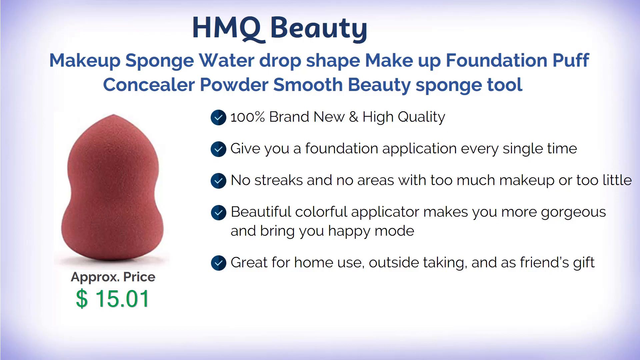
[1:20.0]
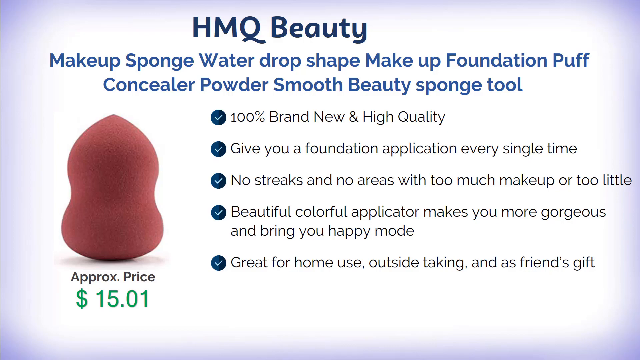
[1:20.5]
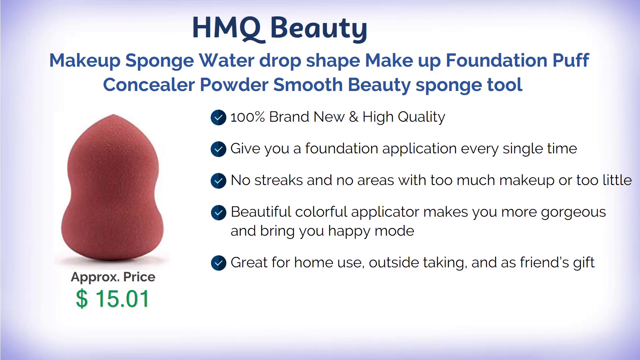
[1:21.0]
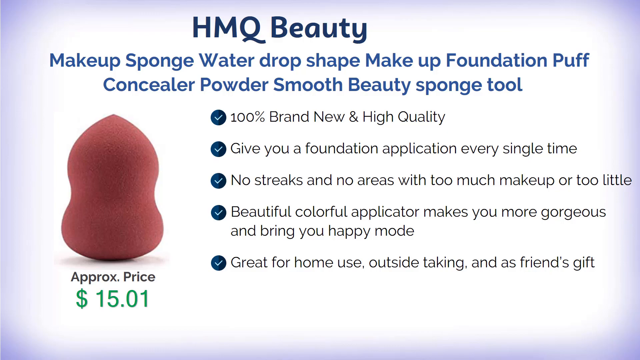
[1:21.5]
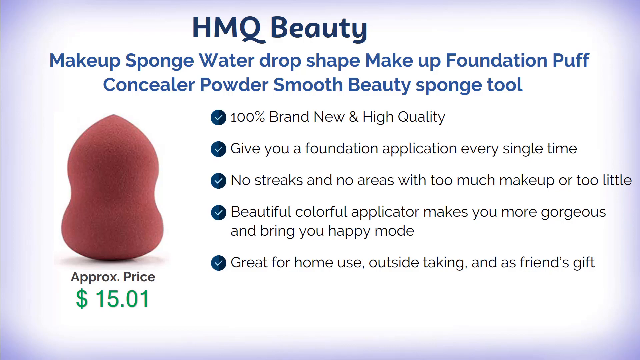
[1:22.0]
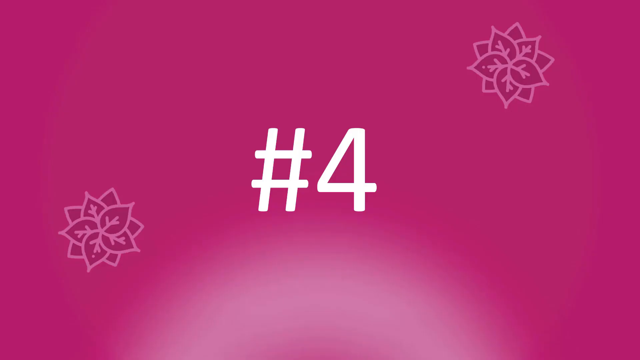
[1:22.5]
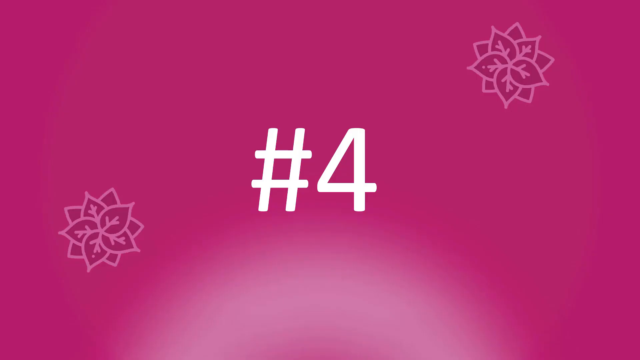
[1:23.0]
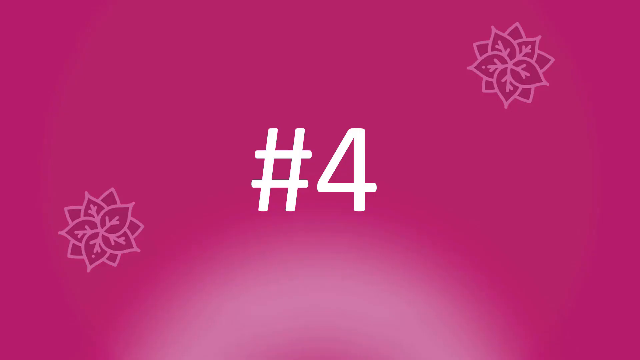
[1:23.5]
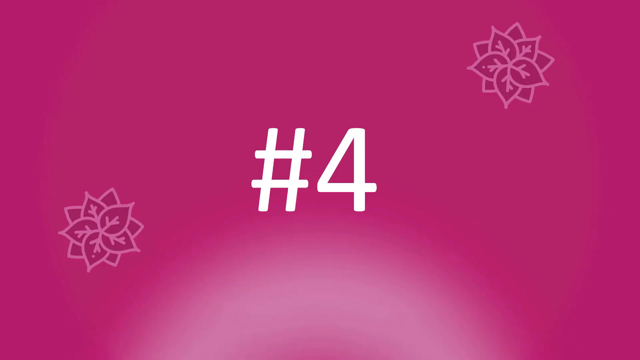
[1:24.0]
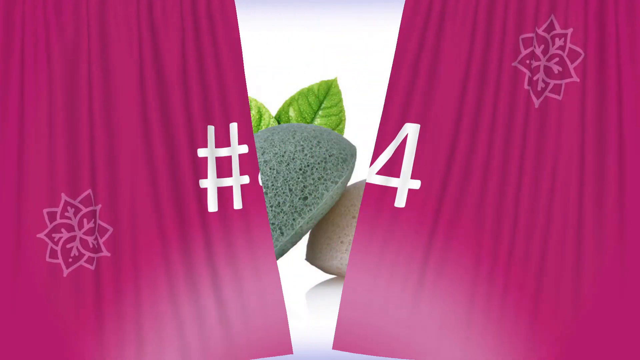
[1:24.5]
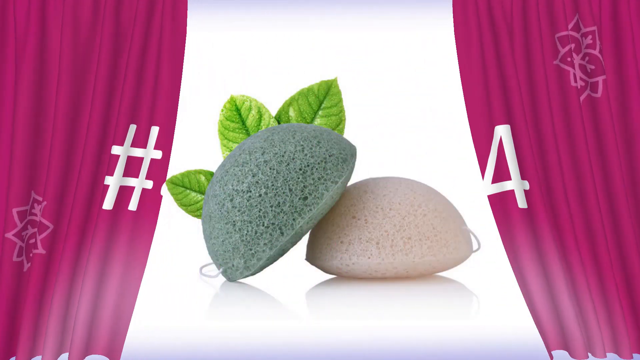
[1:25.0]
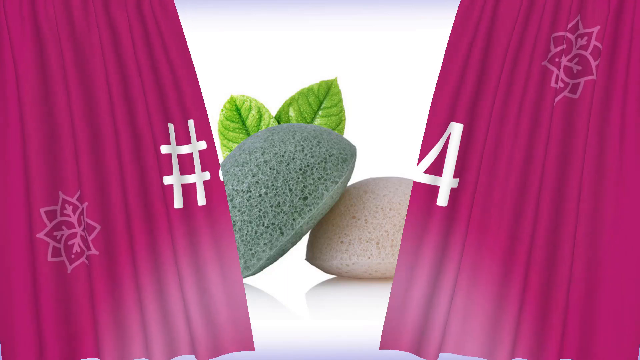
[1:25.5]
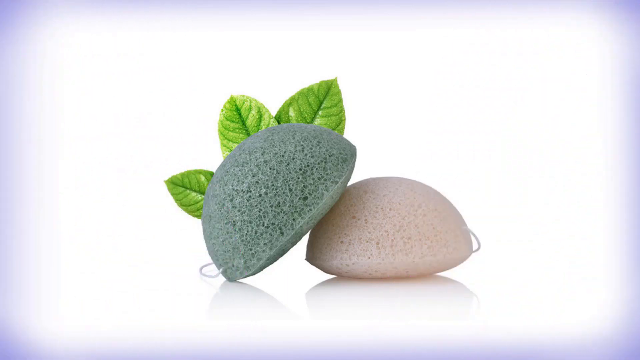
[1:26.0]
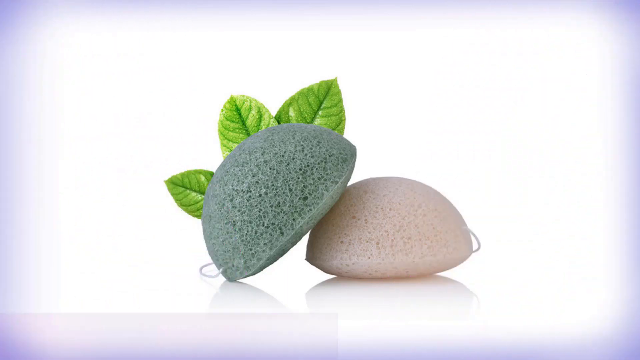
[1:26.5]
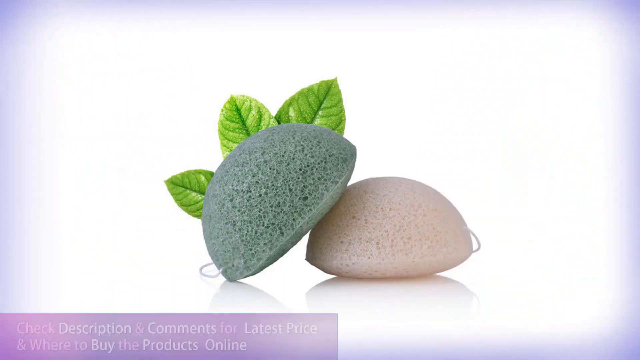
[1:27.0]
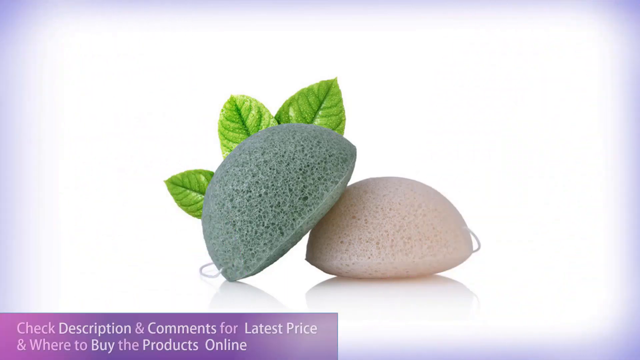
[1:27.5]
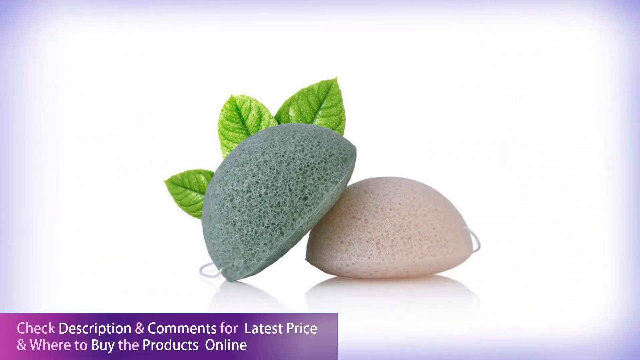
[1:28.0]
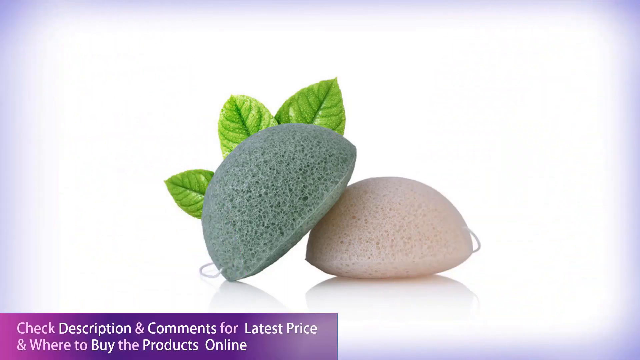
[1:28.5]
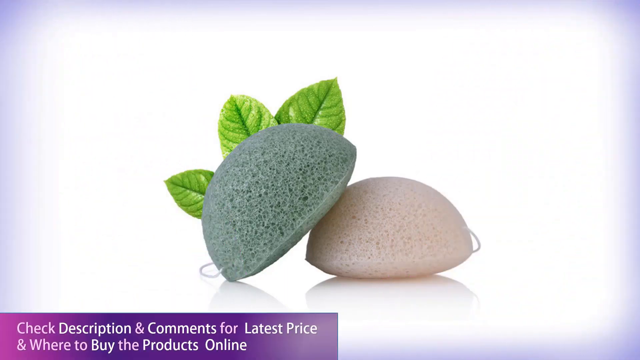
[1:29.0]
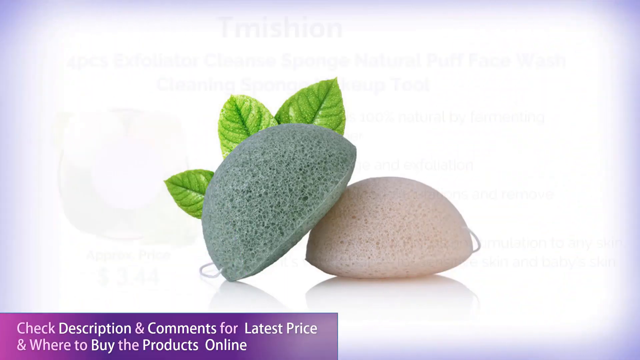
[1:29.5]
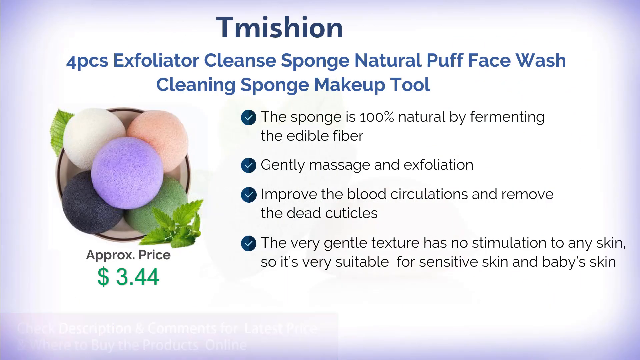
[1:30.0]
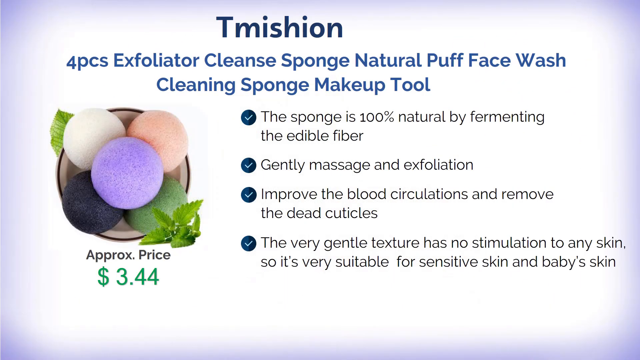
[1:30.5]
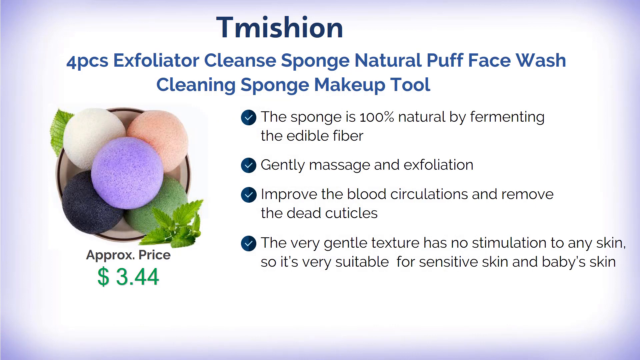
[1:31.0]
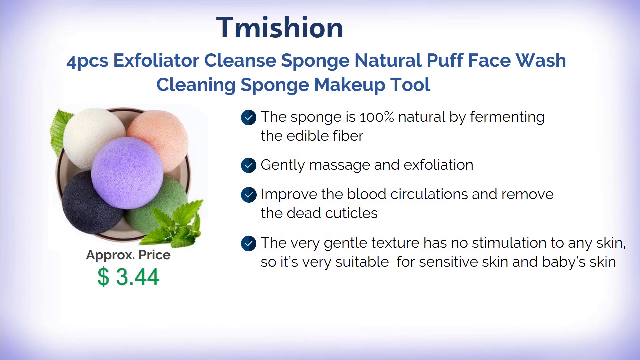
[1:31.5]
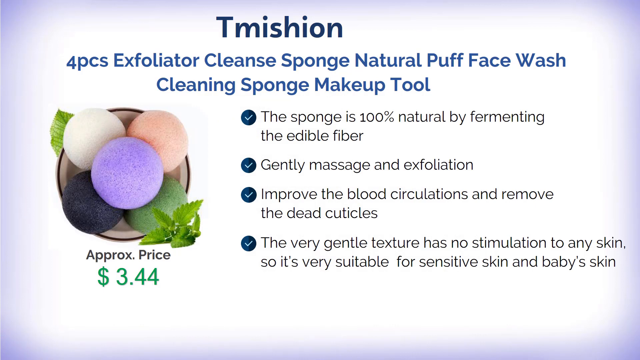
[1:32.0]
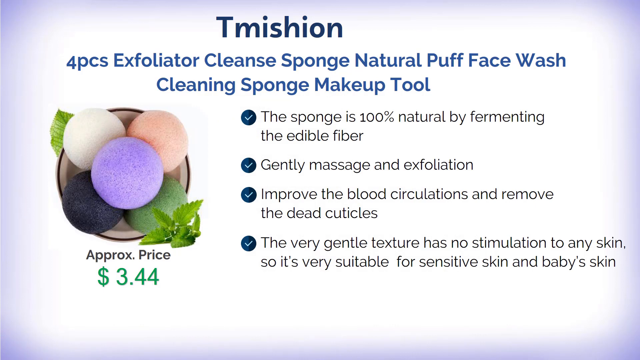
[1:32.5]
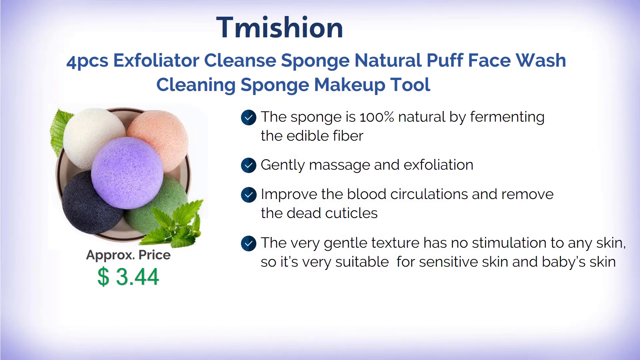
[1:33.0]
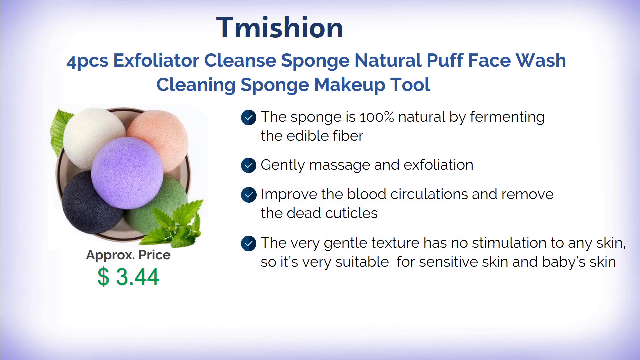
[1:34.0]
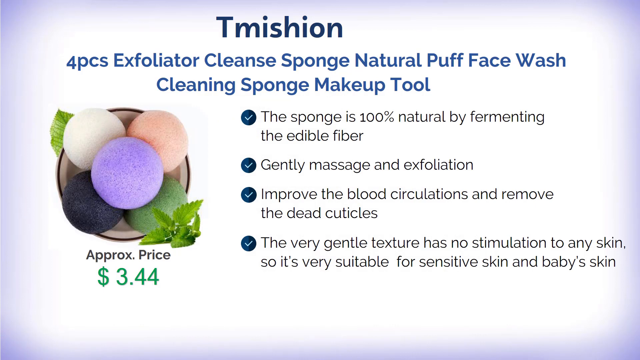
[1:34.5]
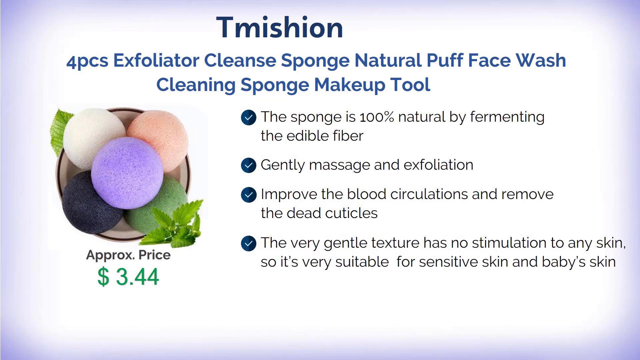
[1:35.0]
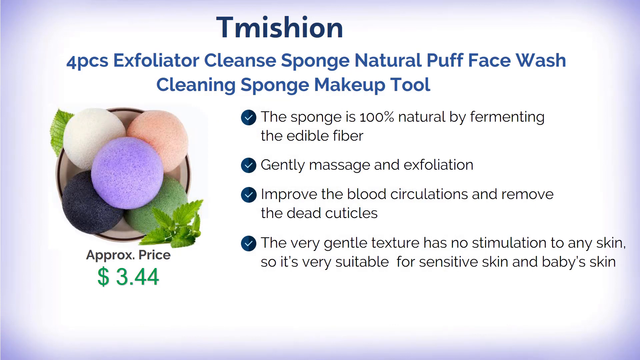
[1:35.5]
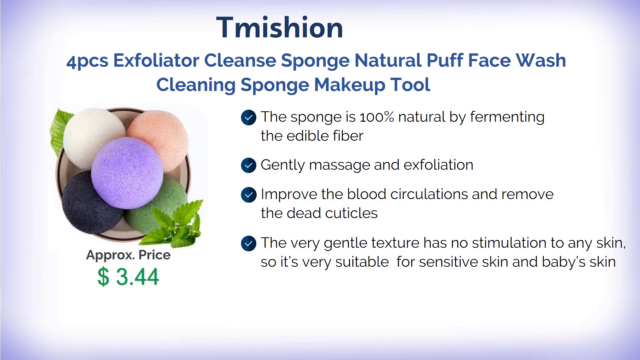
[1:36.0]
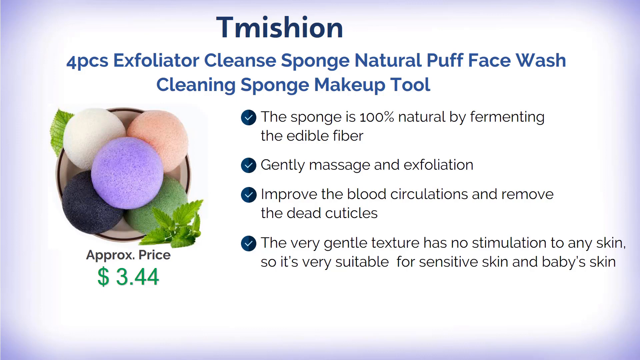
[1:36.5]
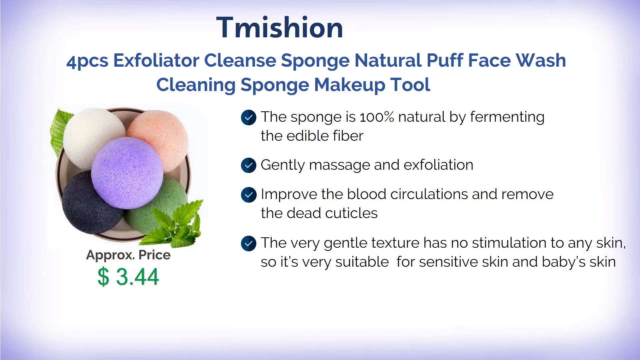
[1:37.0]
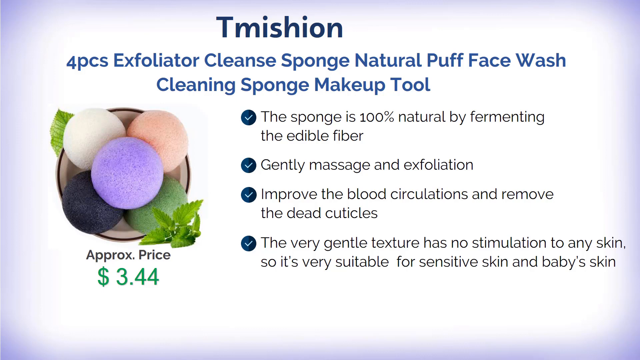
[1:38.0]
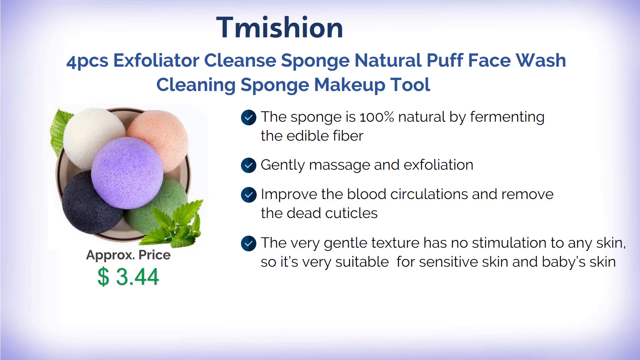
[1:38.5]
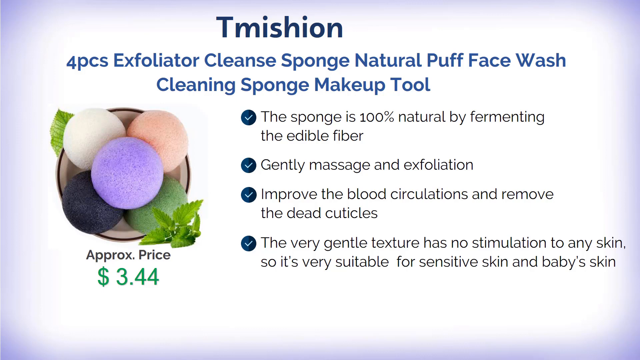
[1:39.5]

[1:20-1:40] A white background carries lots of text in the foreground. At the very top, dark blue text reads "HMQ Beauty", and below it regular blue text reads "Makeup Sponge Water Drop Shape Makeup Foundation Puff Concealer Powder Smooth Beauty Sponge Tool". Lines of black text below read "100% Brand New and High Quality", "give you a foundation application every single time", "no streaks and no areas with too much makeup or too little", "beautiful, colorful applicator, makes you more gorgeous and bring you happy mode", and, near the bottom, "great for home use, outside taking and as friend's gift". On the left side is the product, a curvy-looking item that seems to be a sponge or puff, burgundy or reddish brown in color. Below it, black text reads "approximate price", with green numbers showing "$15.01". The scene then changes to an indigo or pink background with the number 4 in the center.